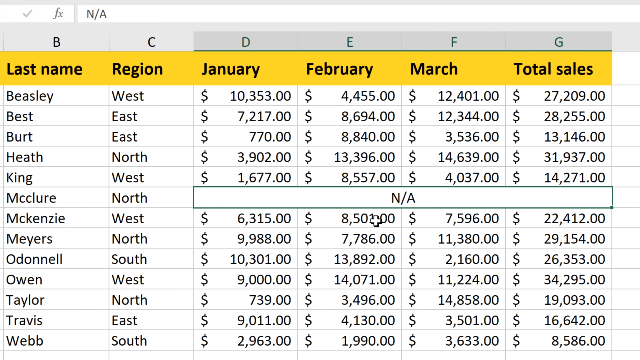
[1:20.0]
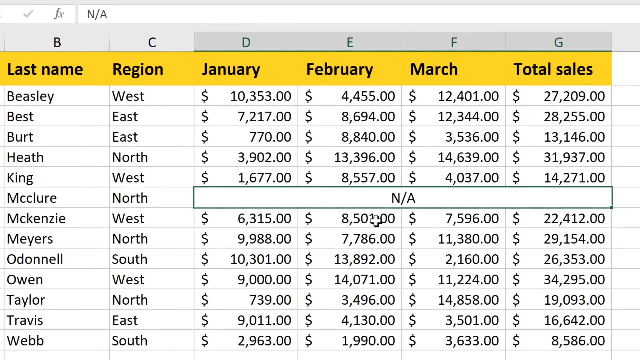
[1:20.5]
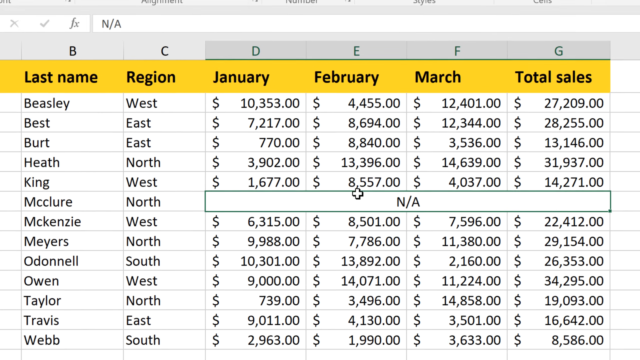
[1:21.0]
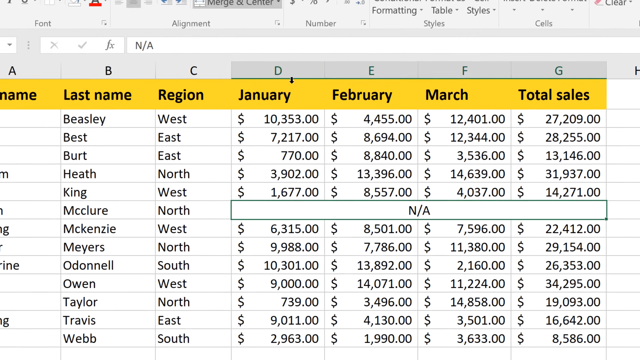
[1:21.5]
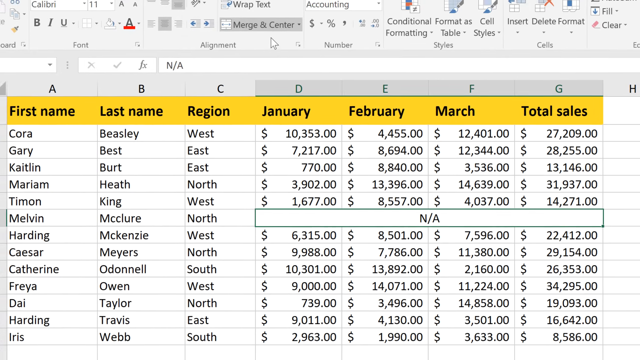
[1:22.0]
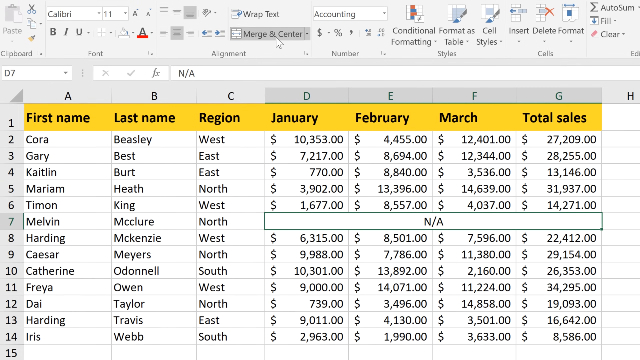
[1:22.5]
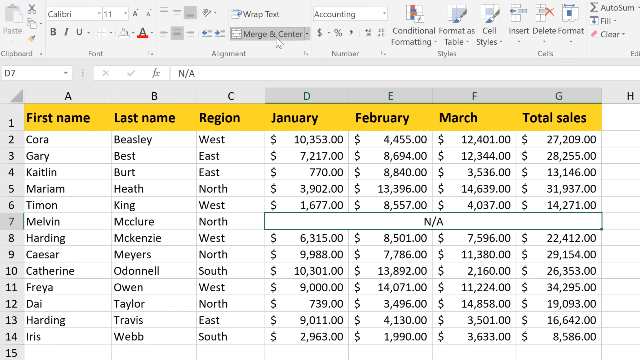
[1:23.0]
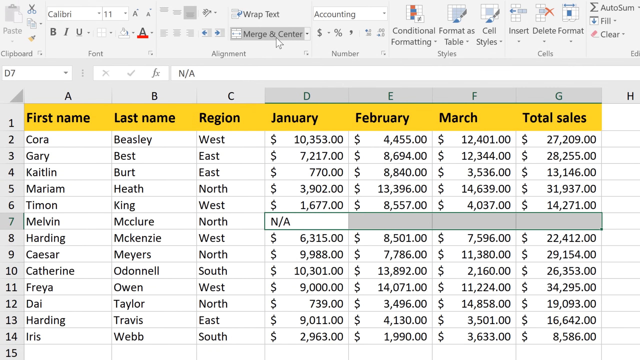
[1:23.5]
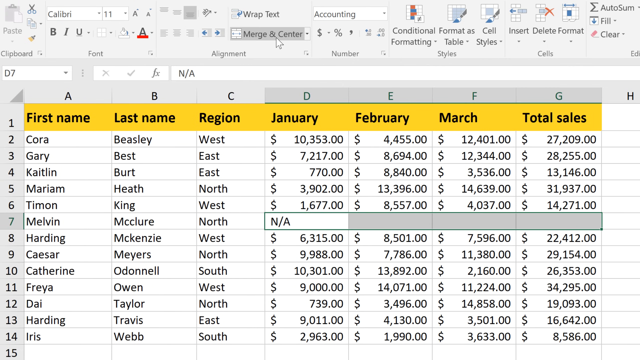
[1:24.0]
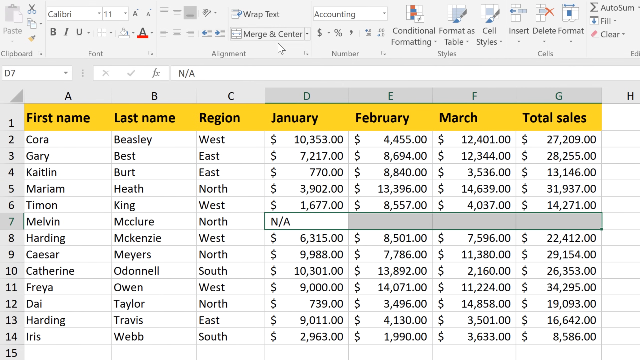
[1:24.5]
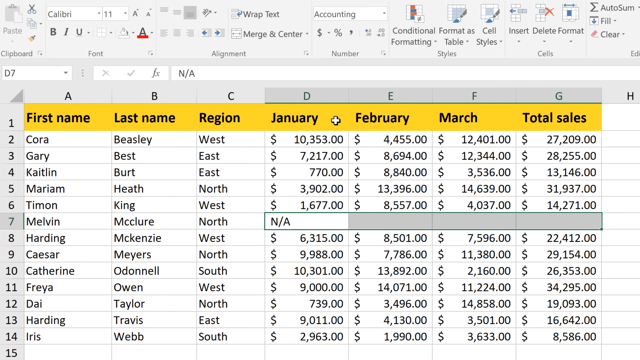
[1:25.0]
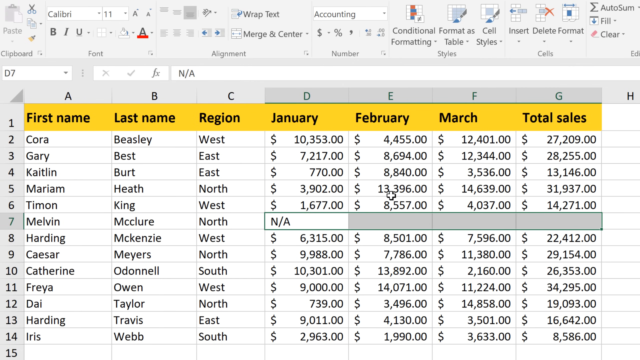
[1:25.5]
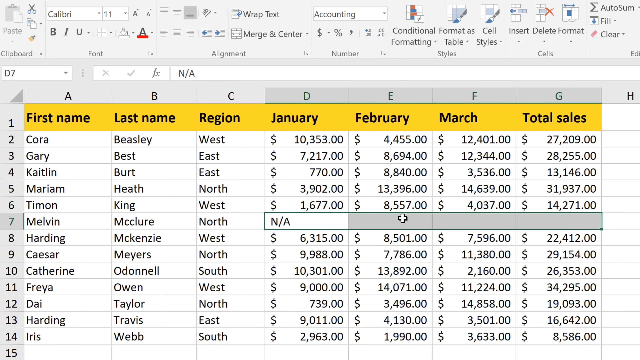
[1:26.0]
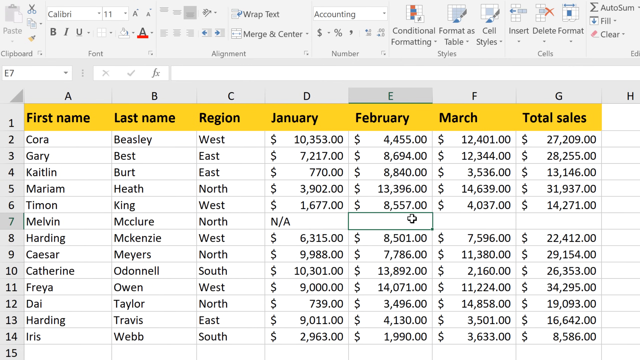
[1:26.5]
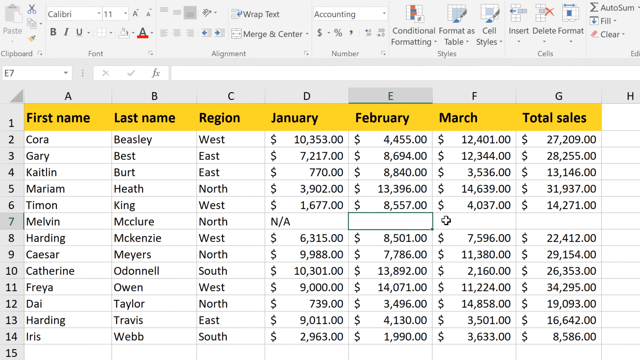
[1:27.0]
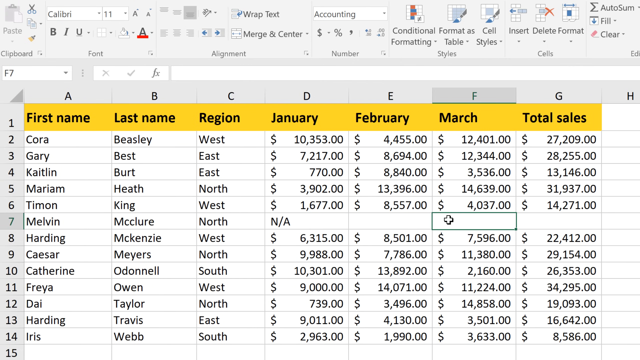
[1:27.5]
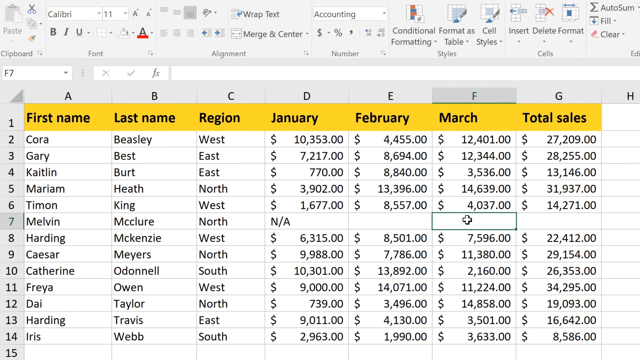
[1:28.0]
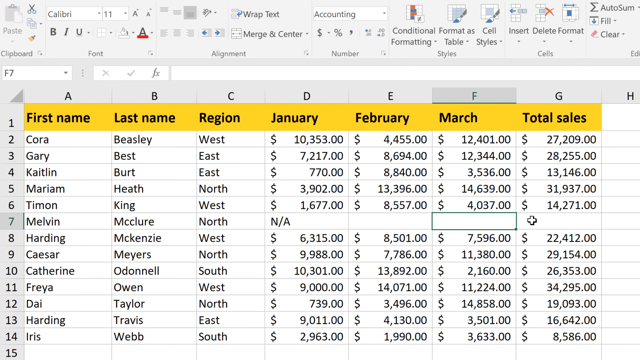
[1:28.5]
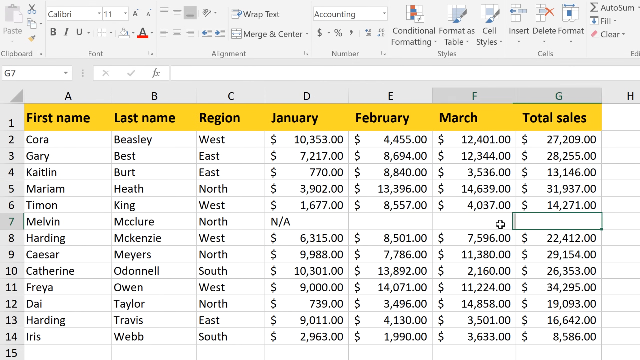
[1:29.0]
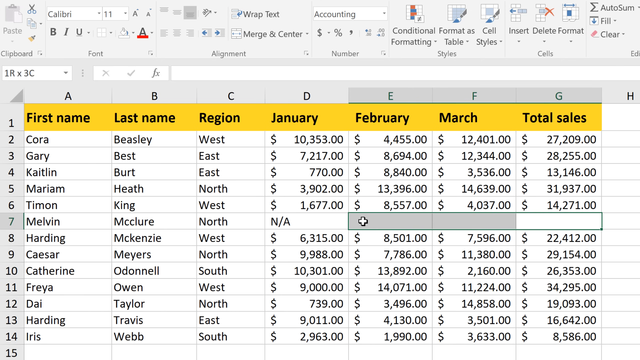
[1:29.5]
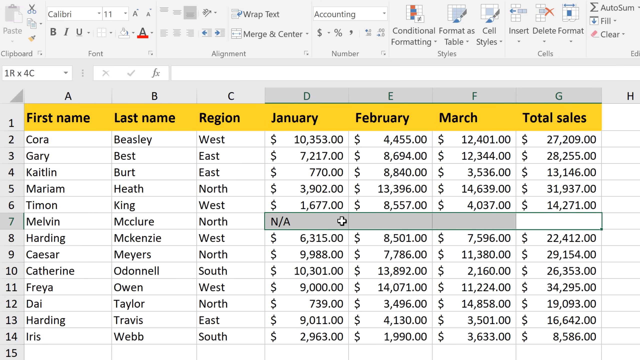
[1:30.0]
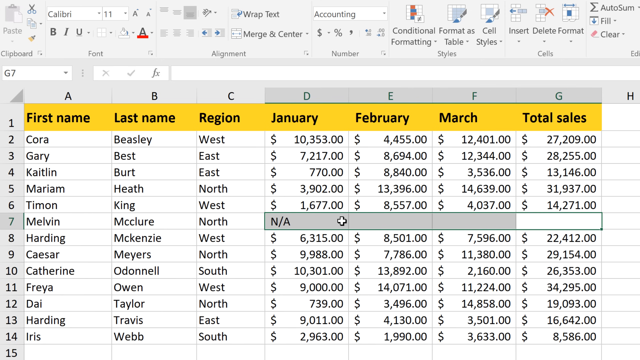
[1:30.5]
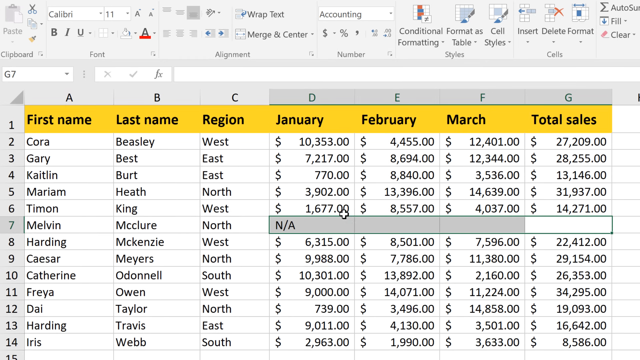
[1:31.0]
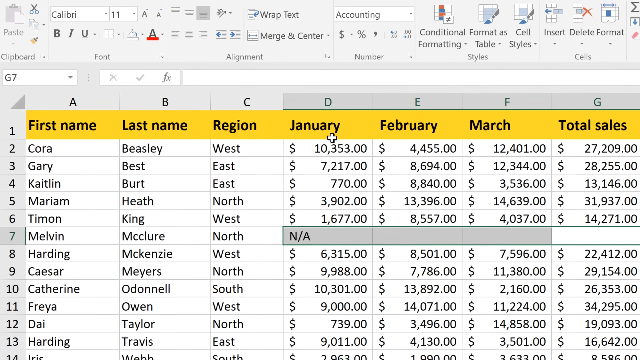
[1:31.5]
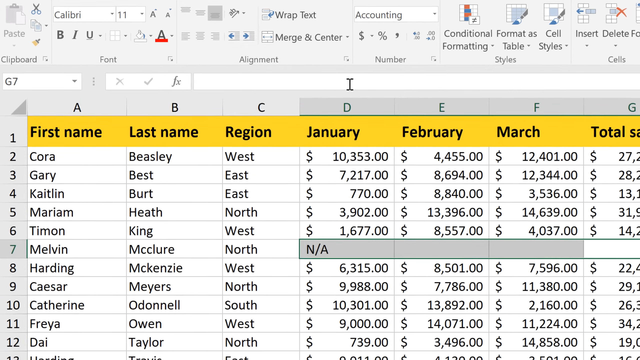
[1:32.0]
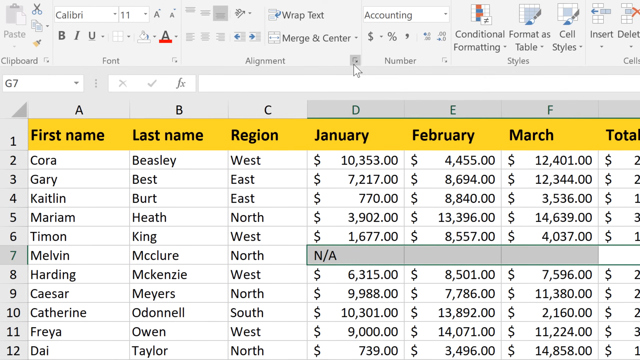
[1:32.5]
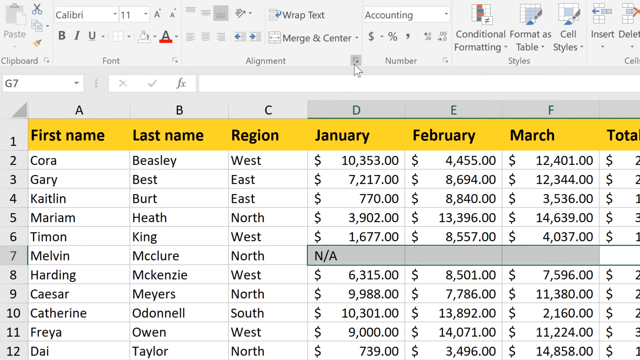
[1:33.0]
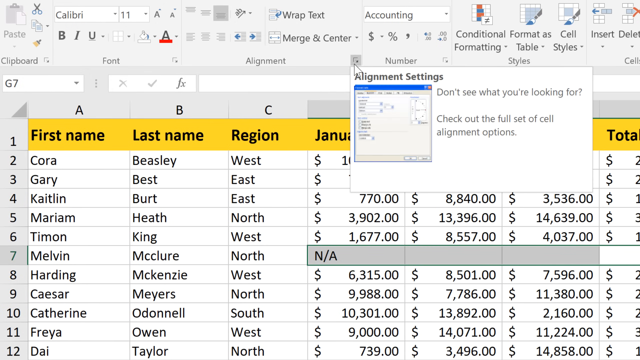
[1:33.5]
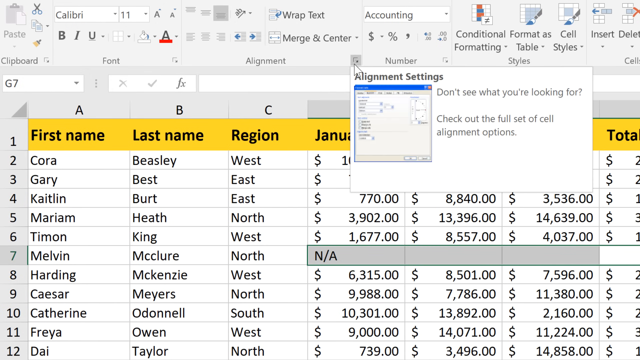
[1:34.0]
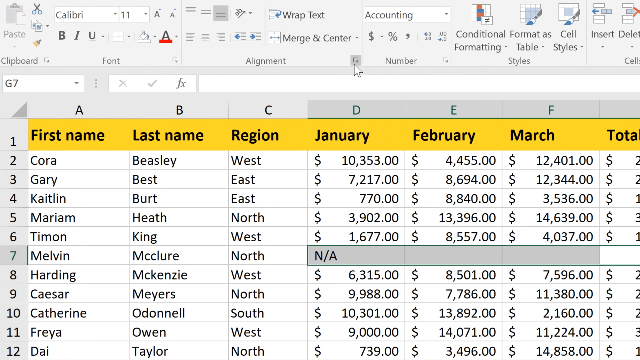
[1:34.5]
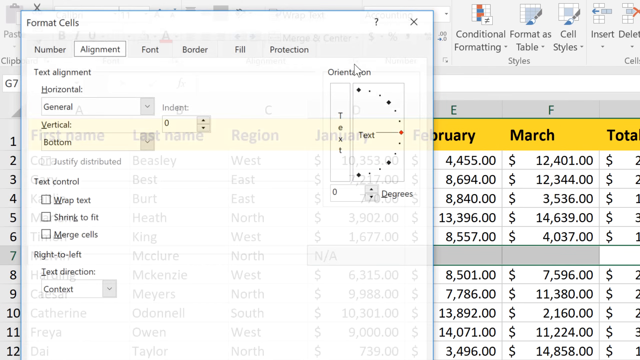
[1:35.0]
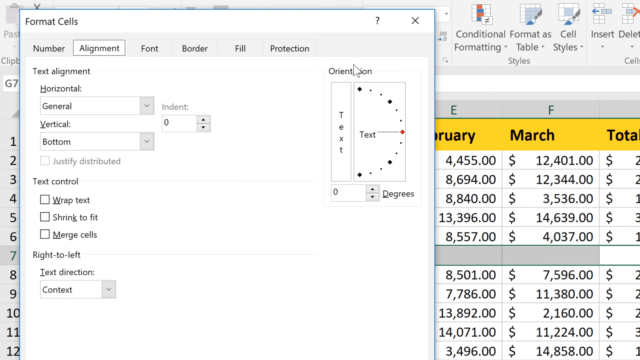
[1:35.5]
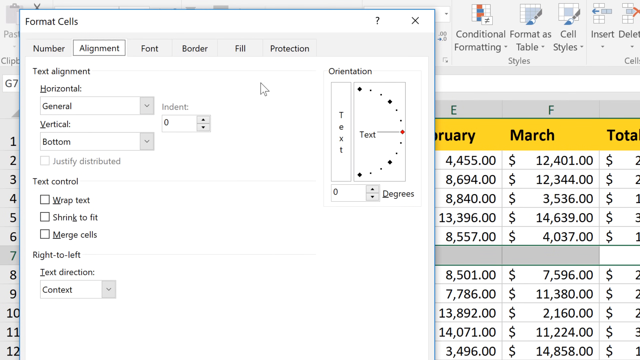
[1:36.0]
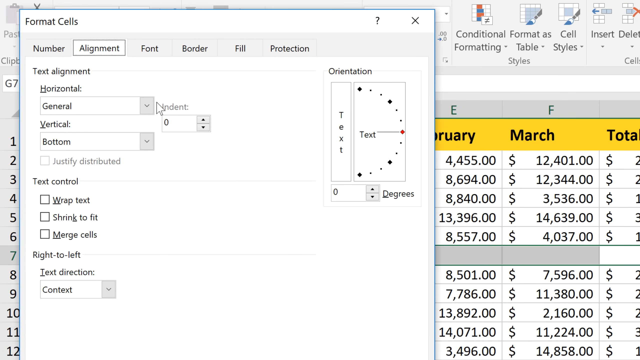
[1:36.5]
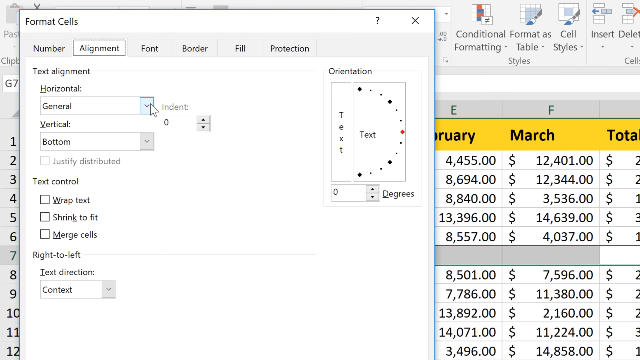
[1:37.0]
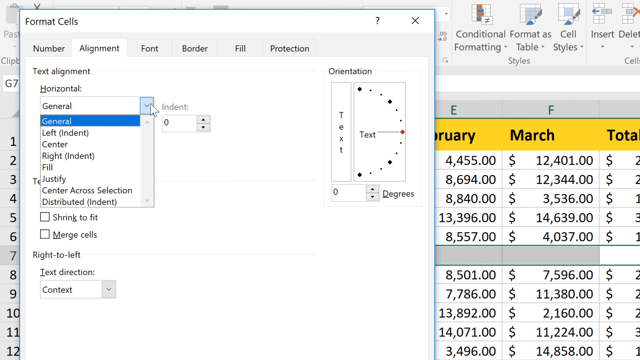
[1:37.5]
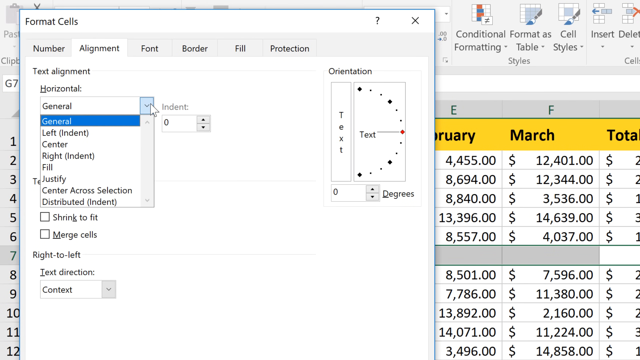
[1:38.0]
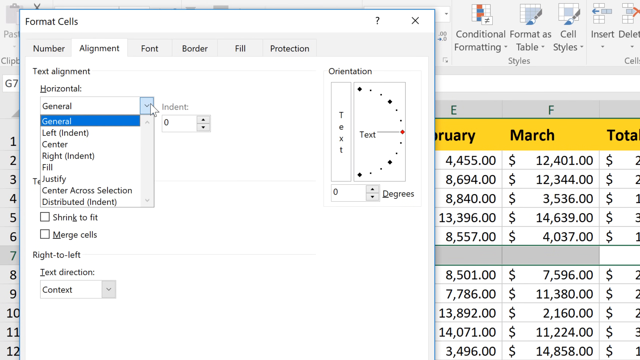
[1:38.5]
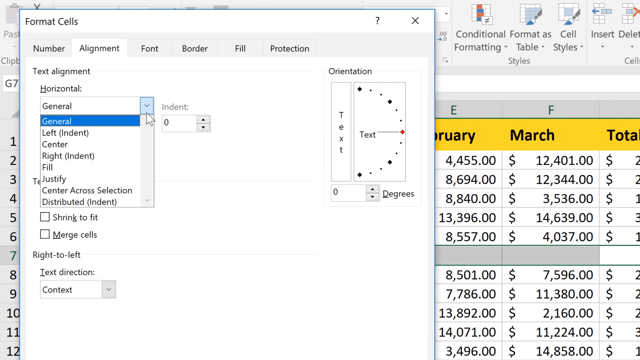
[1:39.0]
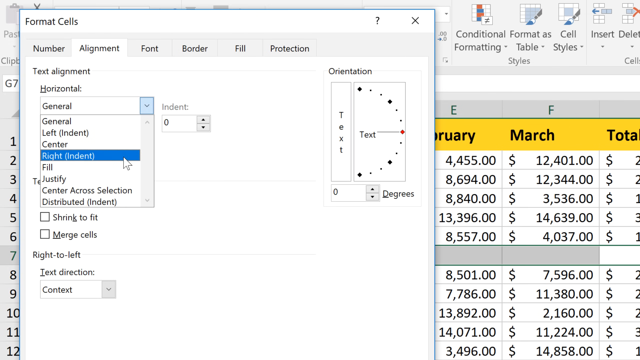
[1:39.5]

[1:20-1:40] The data chart zooms out a little. A number column runs vertically on the far left-hand side, going from 1 to 14. The user moves the cursor to a tool at the top of the screen called "Merge and Center" and clicks it. Four columns under the last name McClure, whose data was deleted, are highlighted; the user moves the rectangle to column F and then column G, highlights all four columns again, and clicks a button next to a tool called "Alignment." A panel reads "Alignment Settings. Don't see what you're looking for? Check out the full set of cell alignment options," which he clicks. A new window opens with tabs and sections for text alignment. The user clicks "Horizontal," and options appear, currently set to "General." The user scrolls through the options.